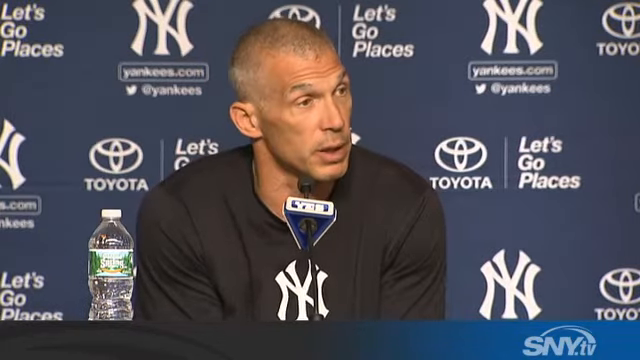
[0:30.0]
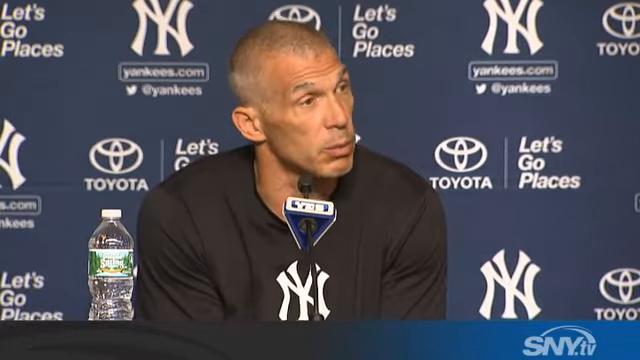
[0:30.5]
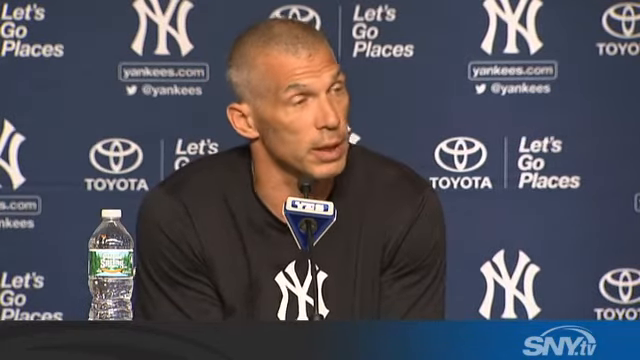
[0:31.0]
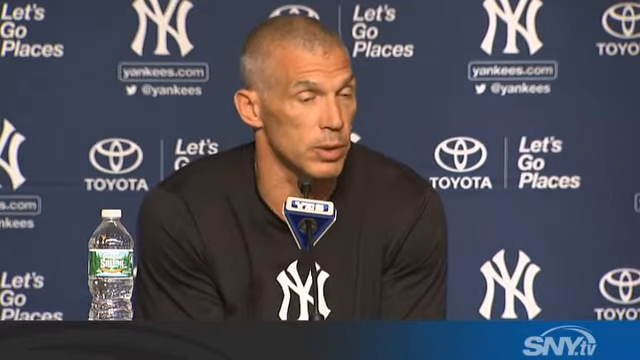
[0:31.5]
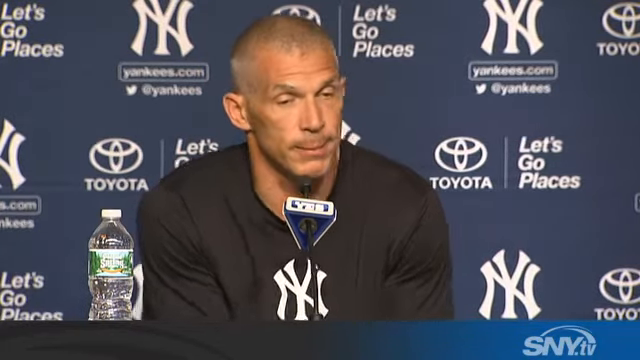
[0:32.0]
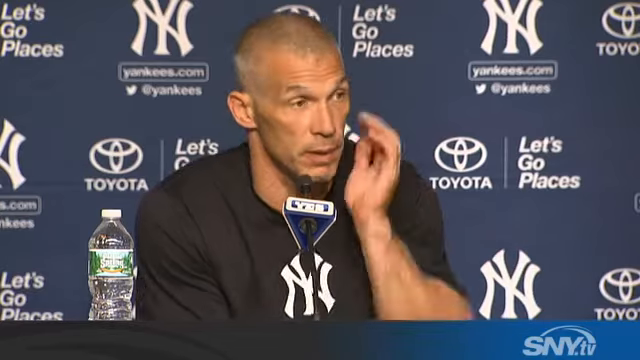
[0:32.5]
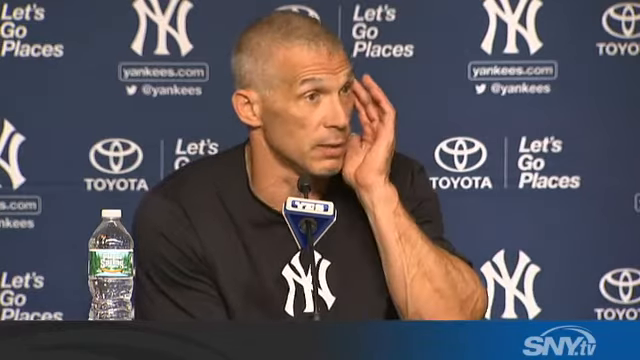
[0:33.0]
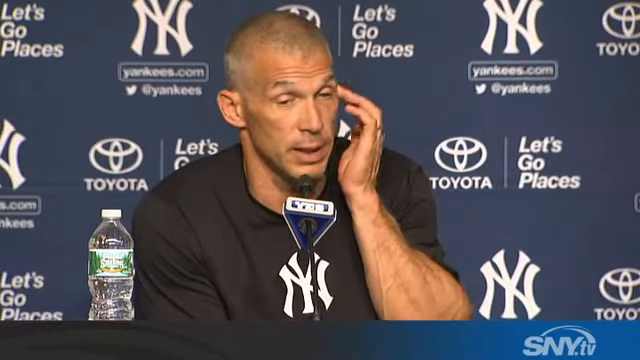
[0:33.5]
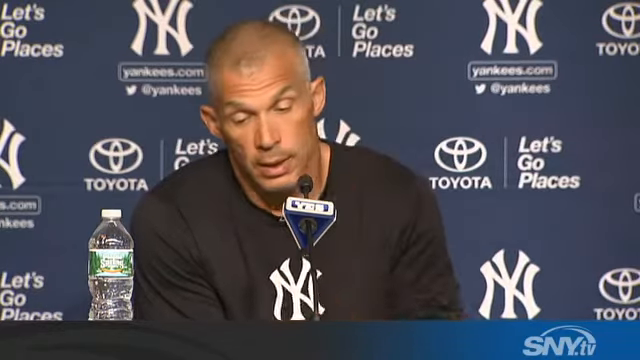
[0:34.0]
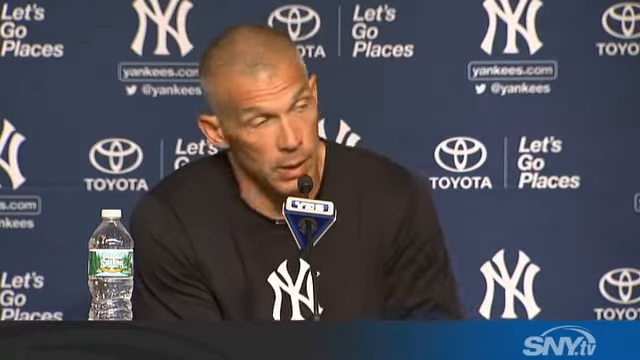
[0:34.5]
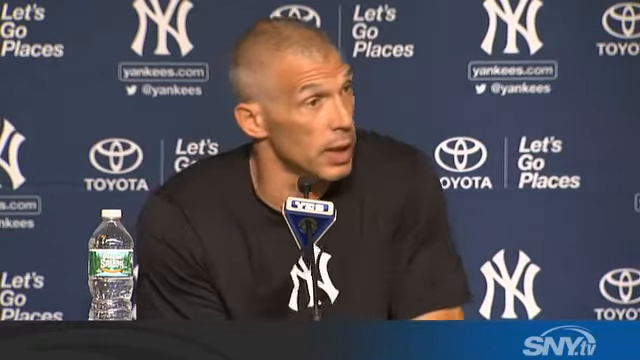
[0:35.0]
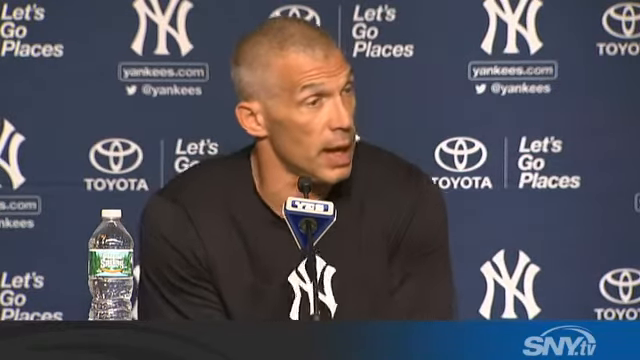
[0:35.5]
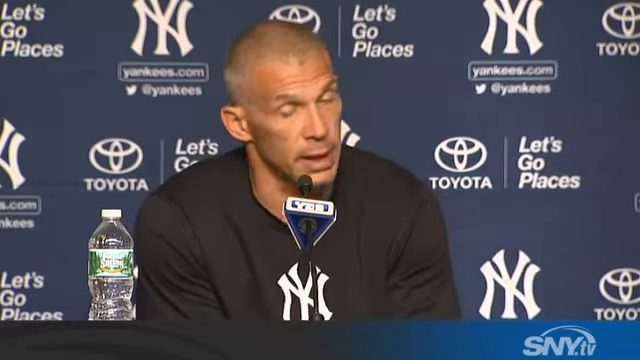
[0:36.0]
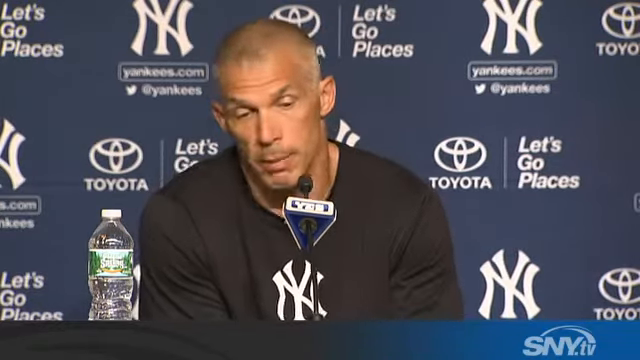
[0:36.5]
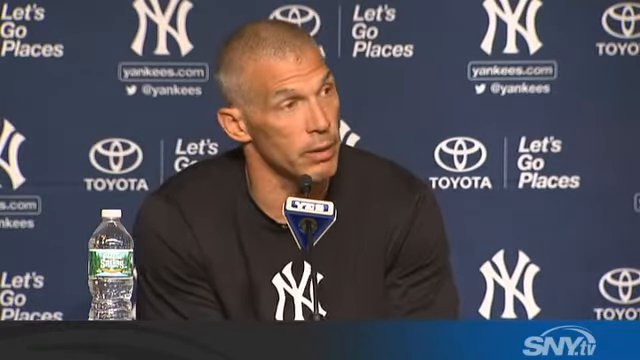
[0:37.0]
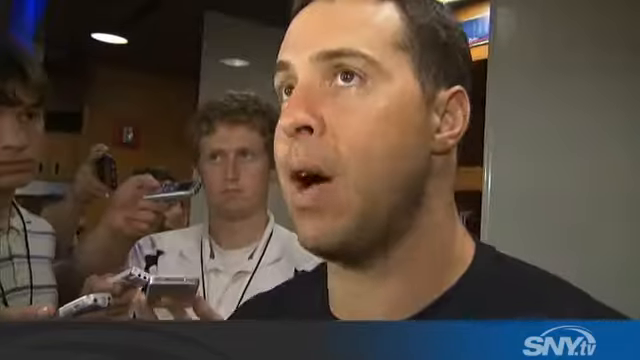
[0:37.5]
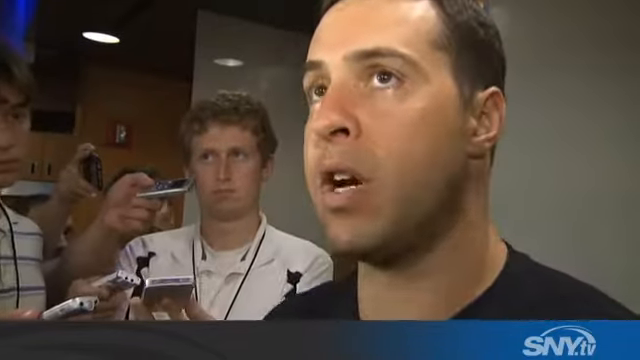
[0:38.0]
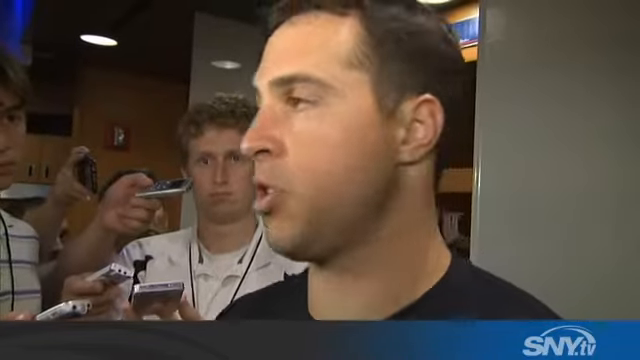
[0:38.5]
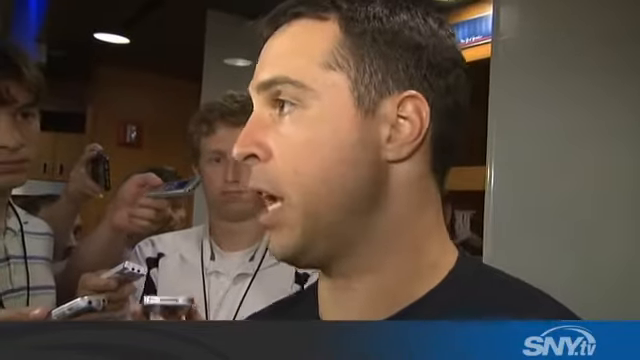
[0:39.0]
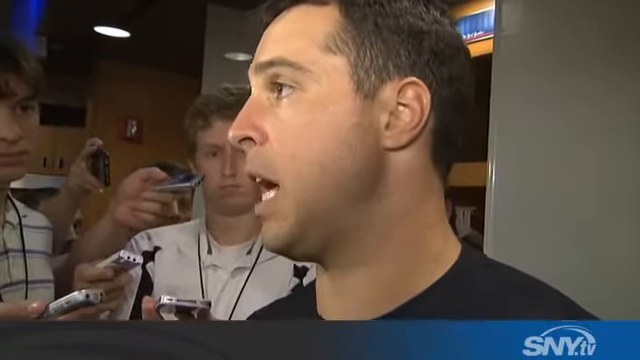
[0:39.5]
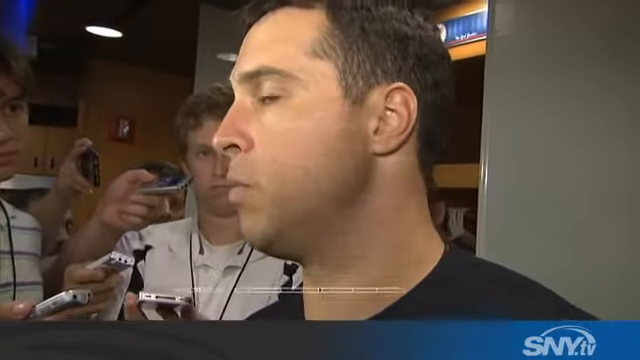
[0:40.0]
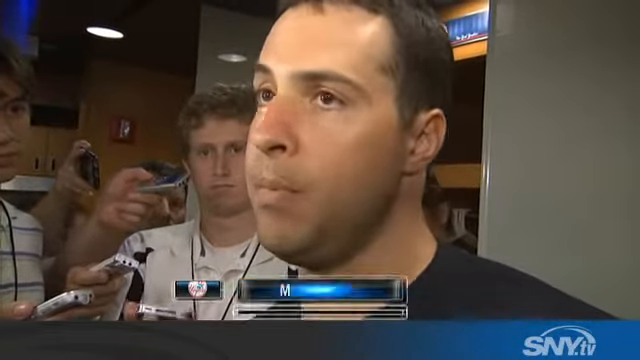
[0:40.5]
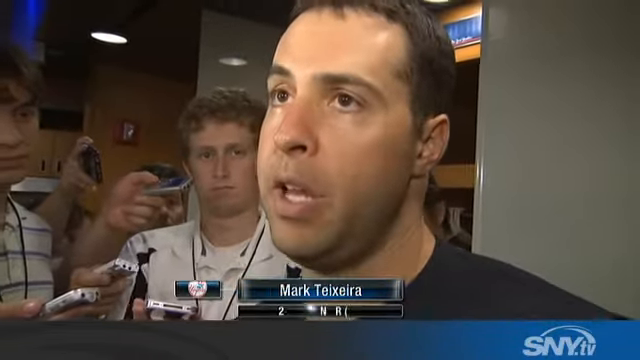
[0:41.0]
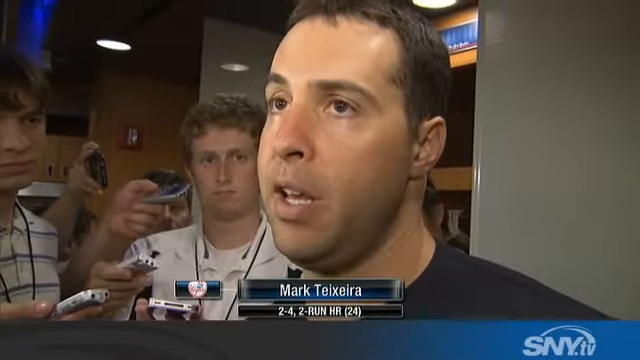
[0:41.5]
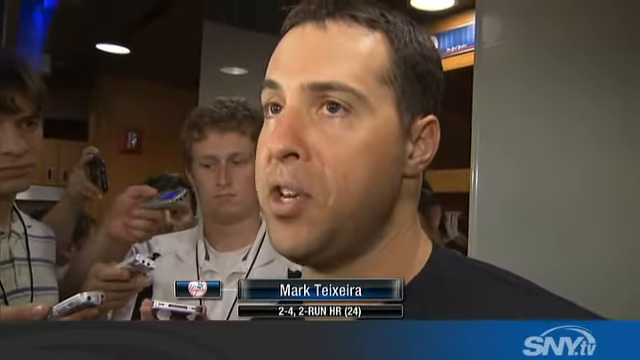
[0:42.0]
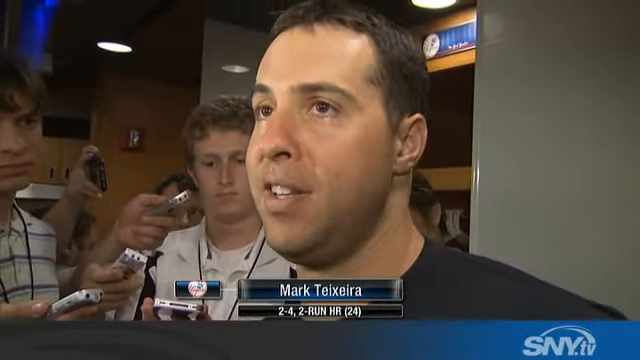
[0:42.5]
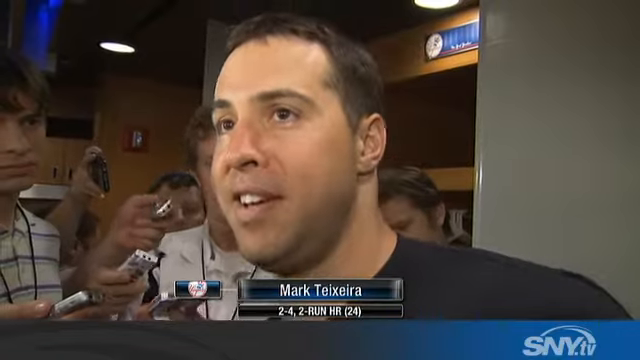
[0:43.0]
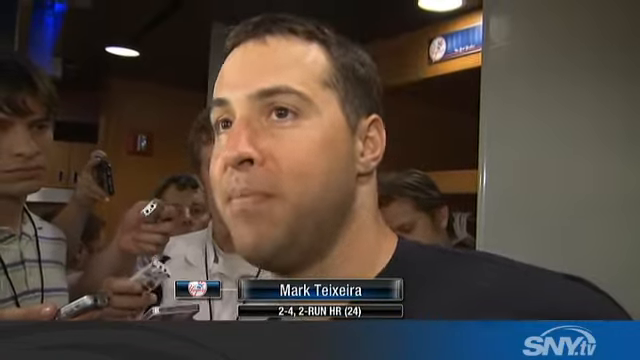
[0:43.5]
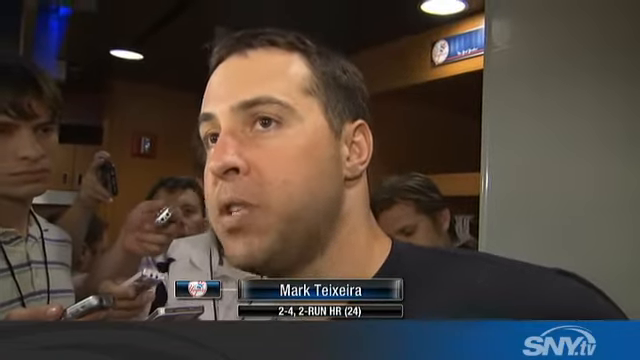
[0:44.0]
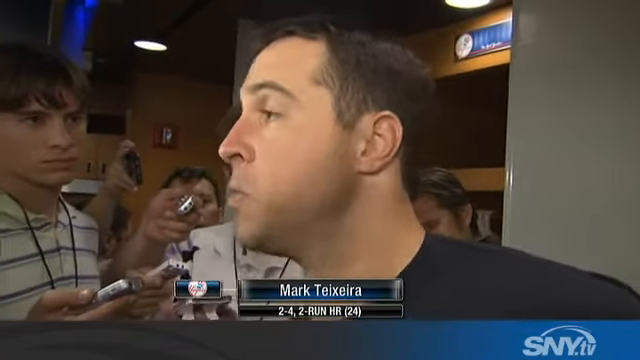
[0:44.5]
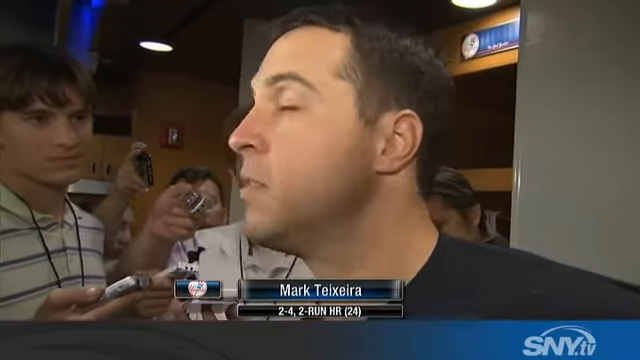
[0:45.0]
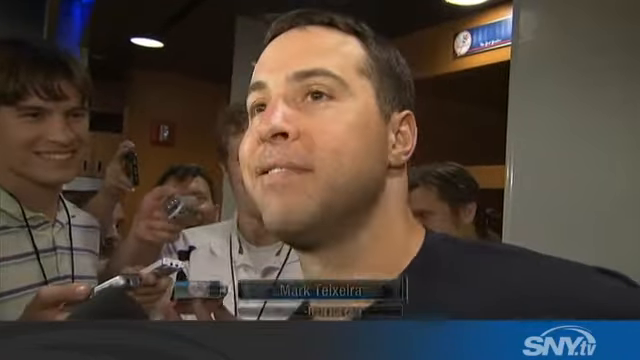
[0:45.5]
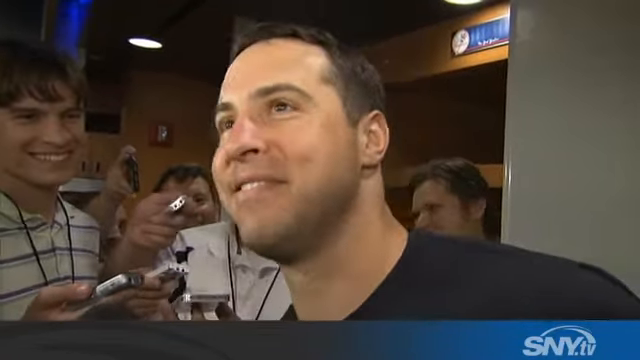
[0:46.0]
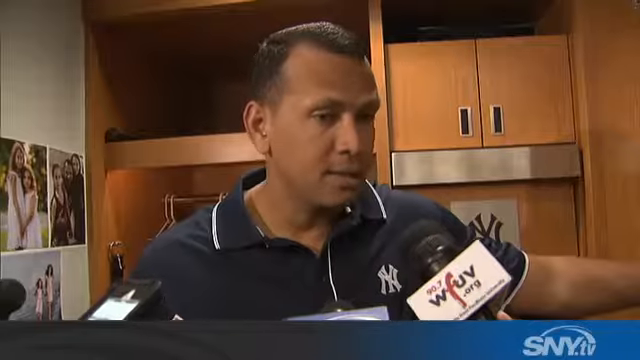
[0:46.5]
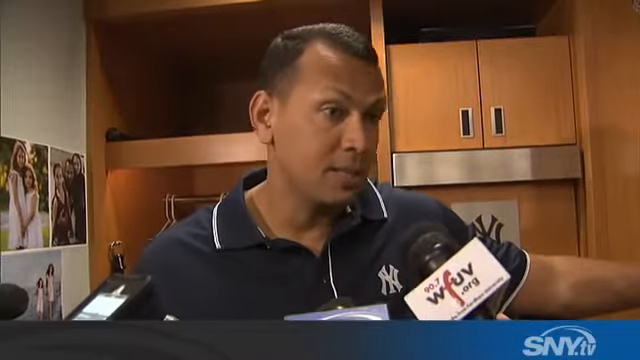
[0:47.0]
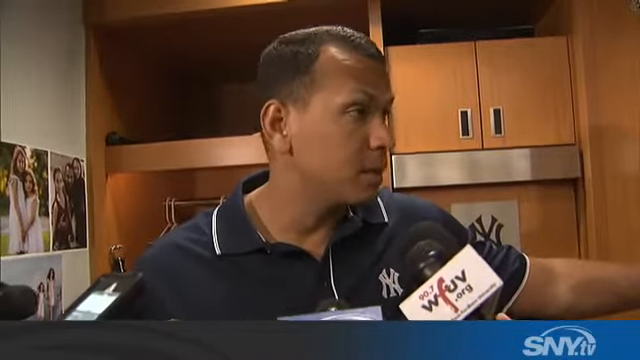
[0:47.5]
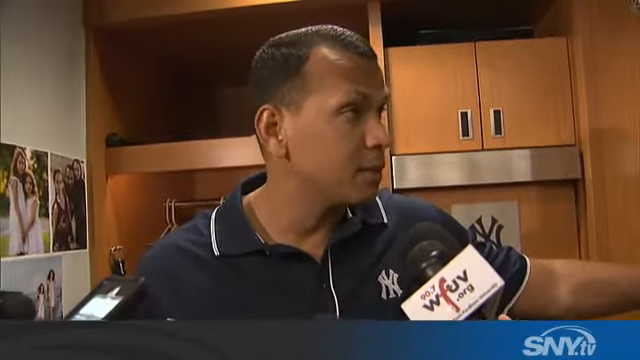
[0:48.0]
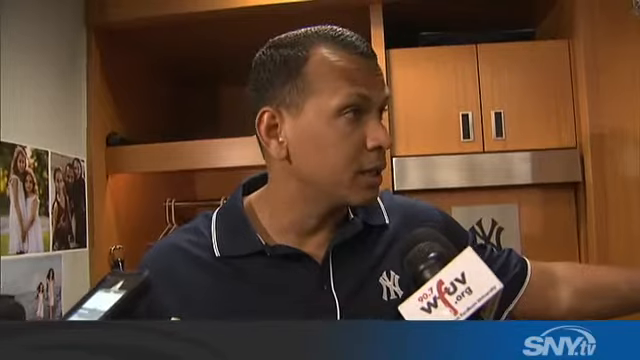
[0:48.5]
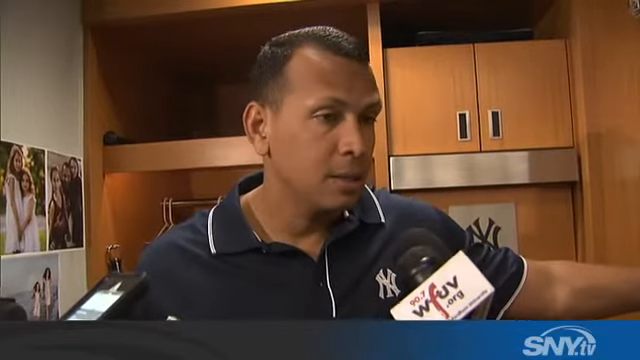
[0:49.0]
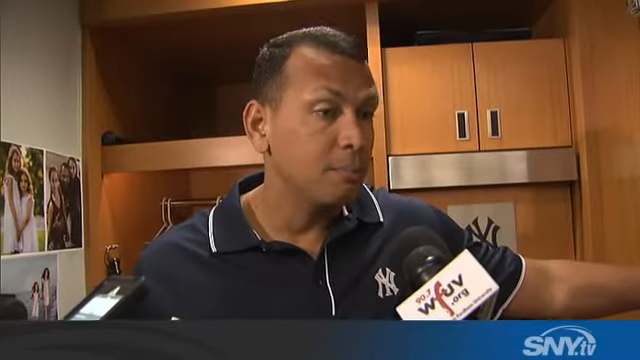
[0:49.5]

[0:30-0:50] The man whose last name begins with G is still talking at the post-game conference. At one point he raises his left hand and uses its middle finger to scratch the side of his face near his eye, then puts his hand down and keeps turning toward the right side of the screen. The video then cuts to a completely different man, apparently from years earlier, with people interviewing him and holding recorders near his face. His name is Mark Teixeira, and he is talking and smiling. Then Alex Rodriguez, A-Rod, appears.